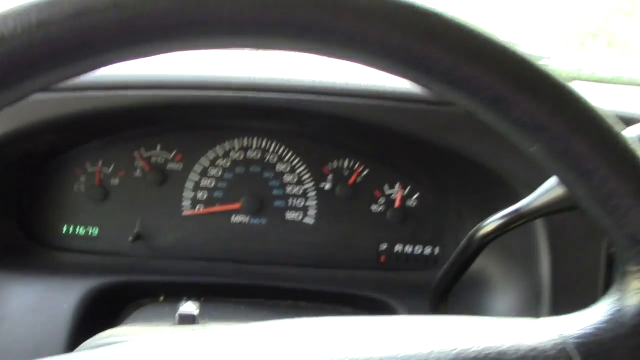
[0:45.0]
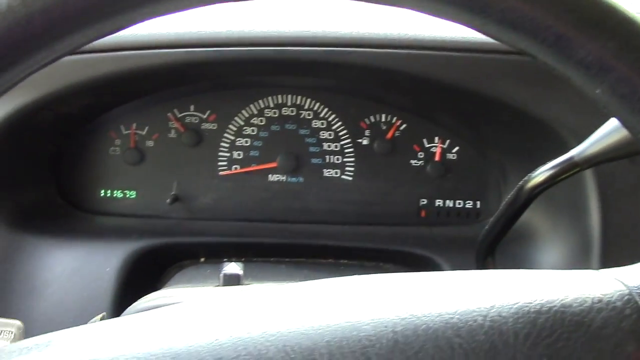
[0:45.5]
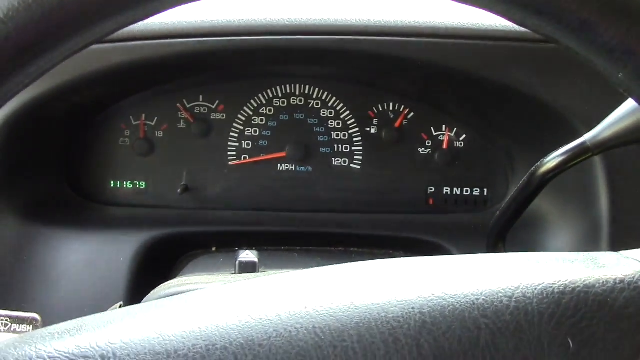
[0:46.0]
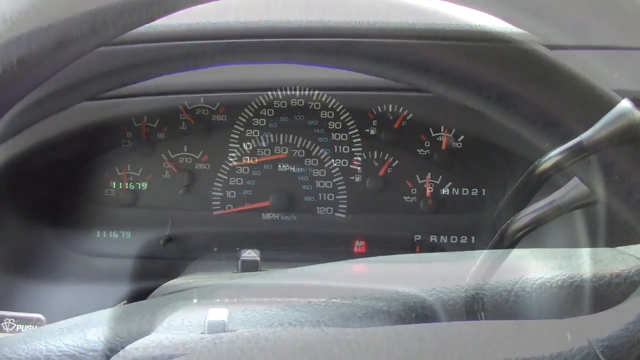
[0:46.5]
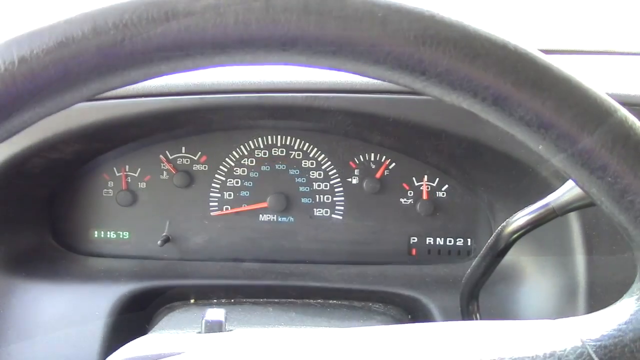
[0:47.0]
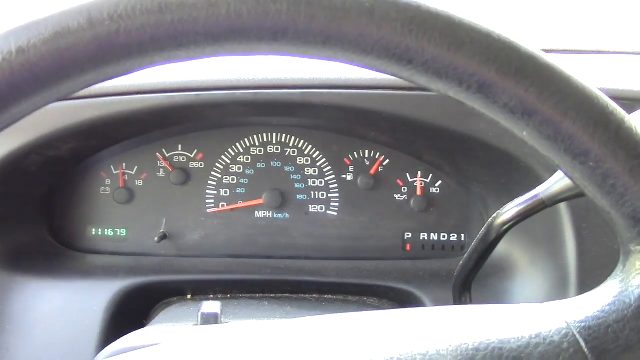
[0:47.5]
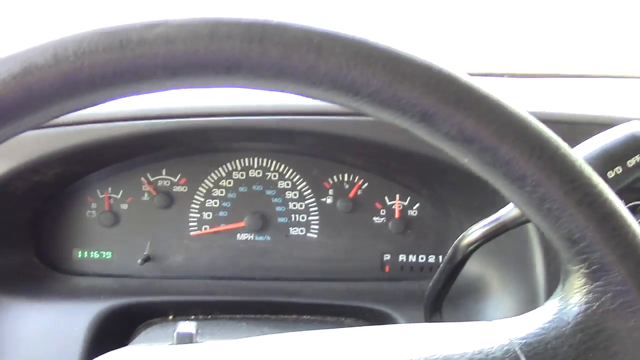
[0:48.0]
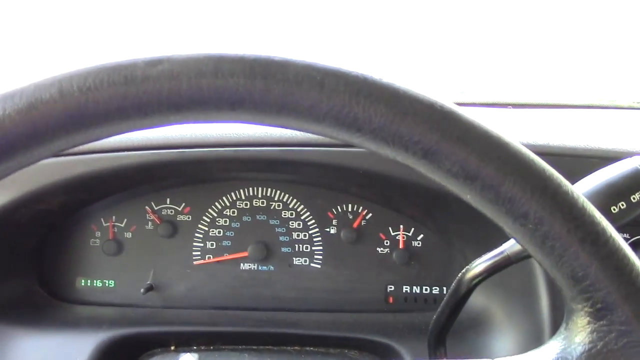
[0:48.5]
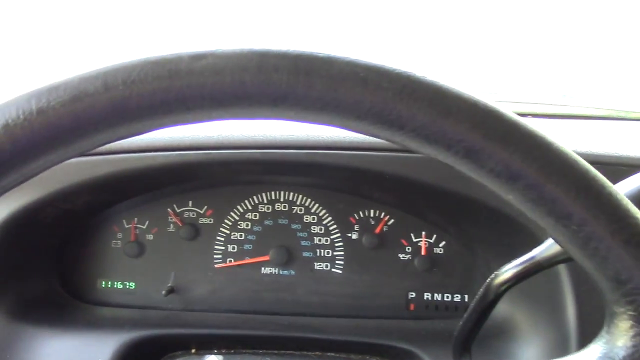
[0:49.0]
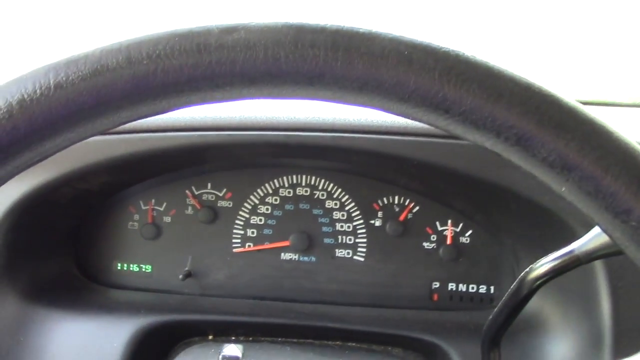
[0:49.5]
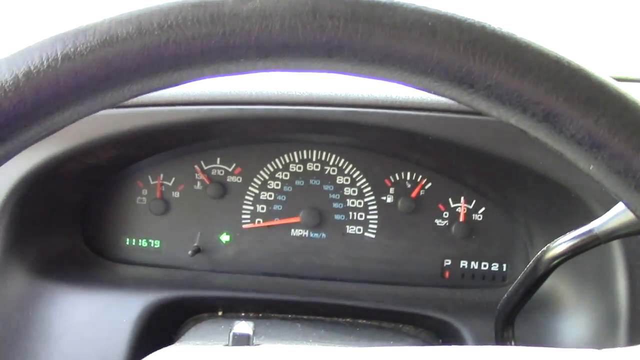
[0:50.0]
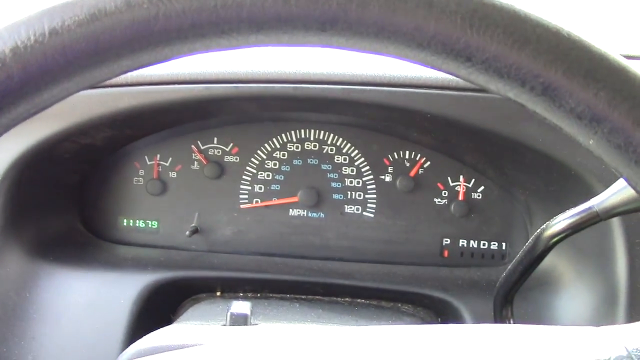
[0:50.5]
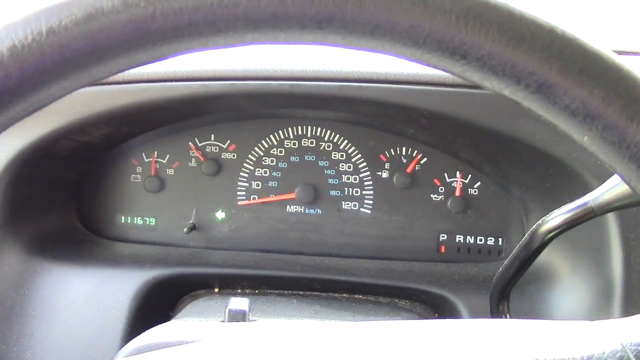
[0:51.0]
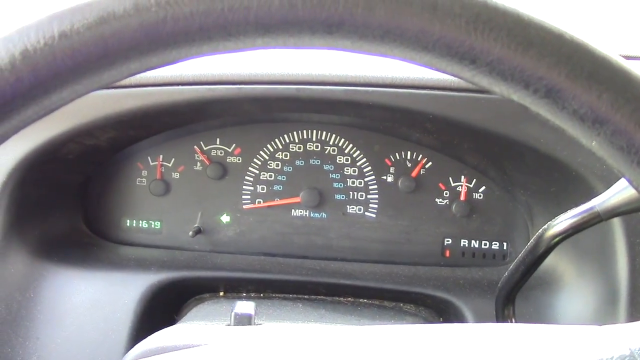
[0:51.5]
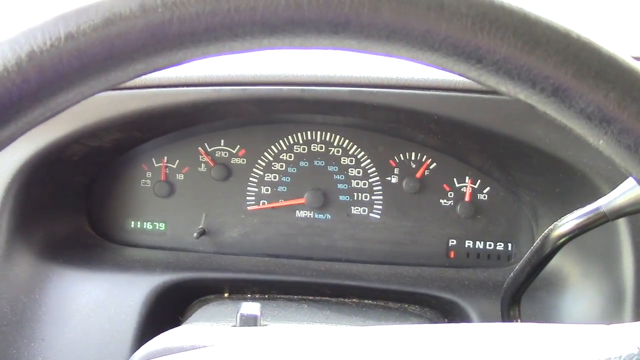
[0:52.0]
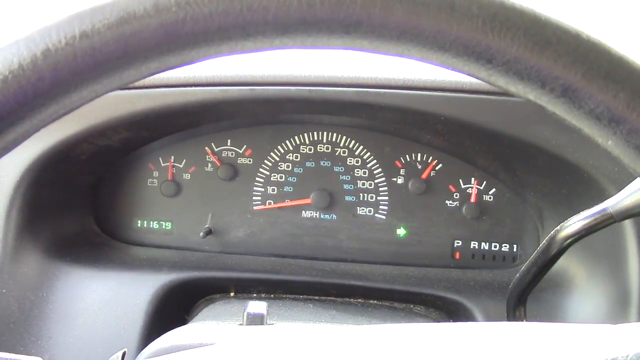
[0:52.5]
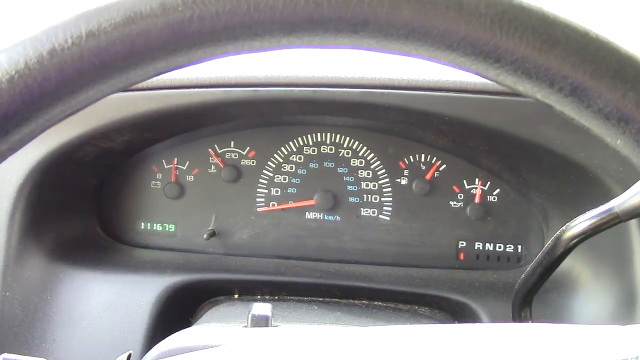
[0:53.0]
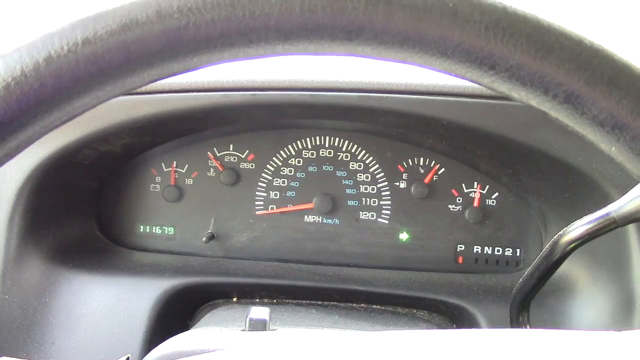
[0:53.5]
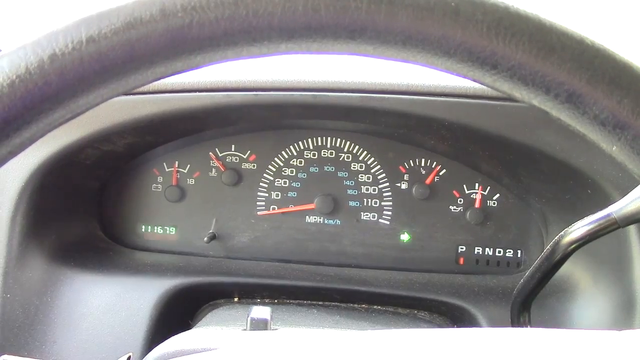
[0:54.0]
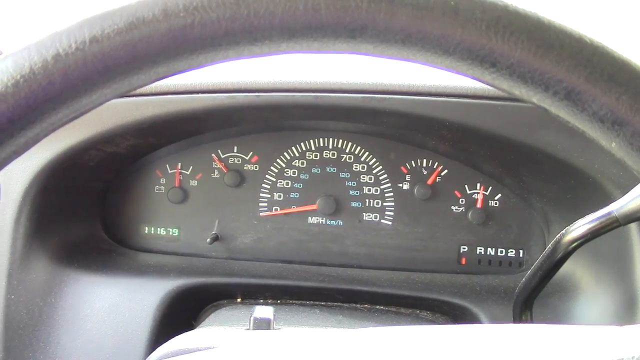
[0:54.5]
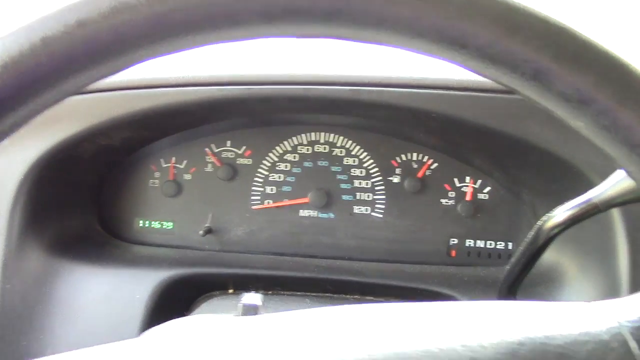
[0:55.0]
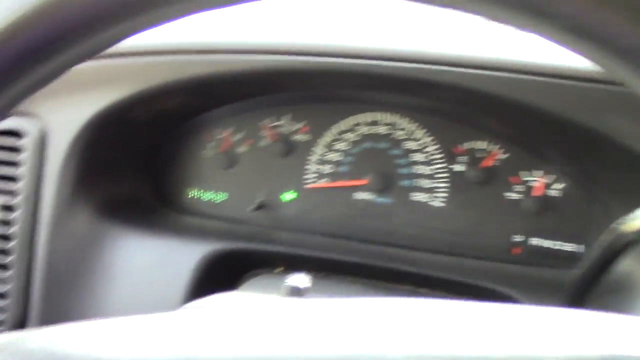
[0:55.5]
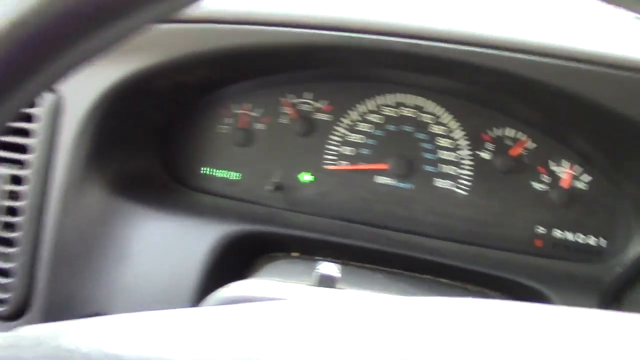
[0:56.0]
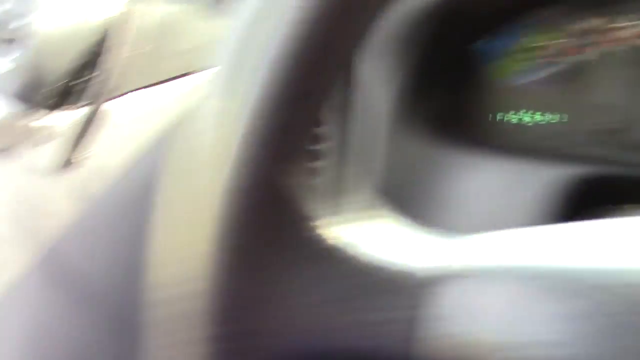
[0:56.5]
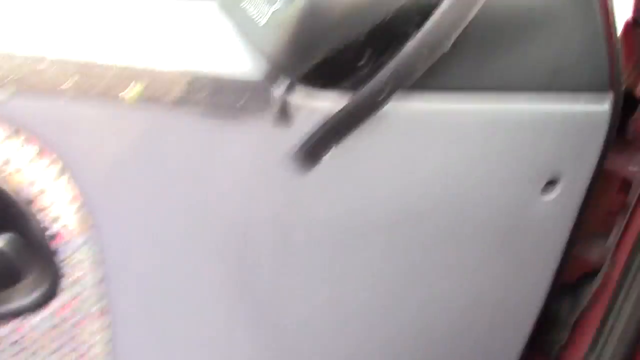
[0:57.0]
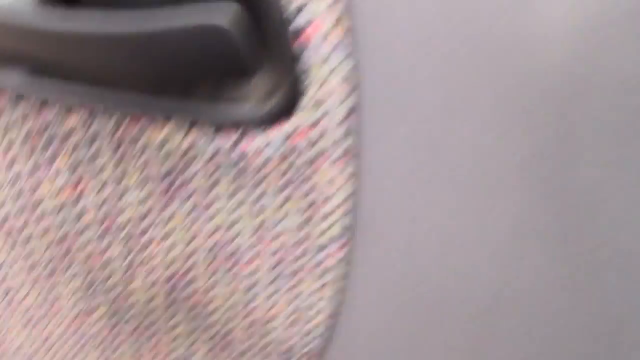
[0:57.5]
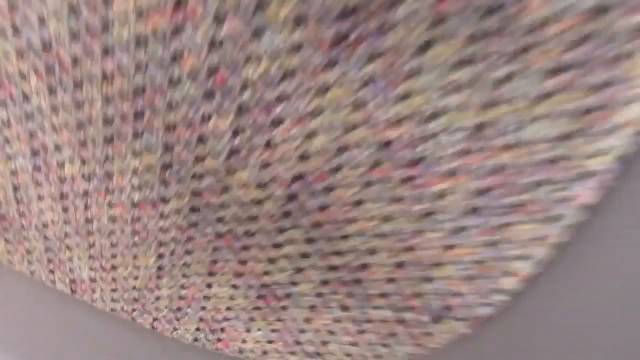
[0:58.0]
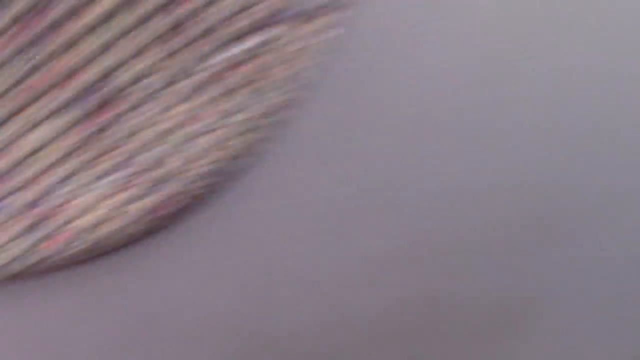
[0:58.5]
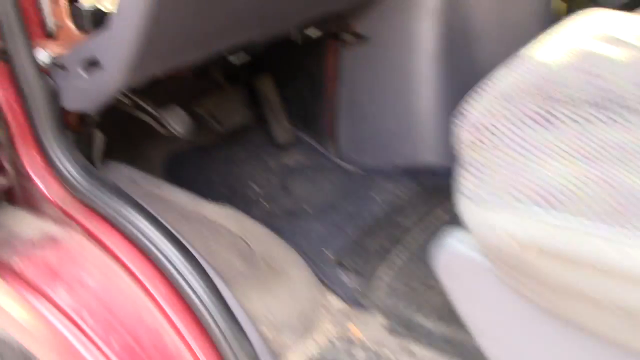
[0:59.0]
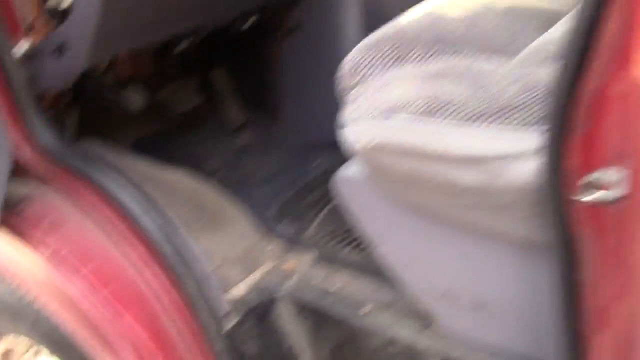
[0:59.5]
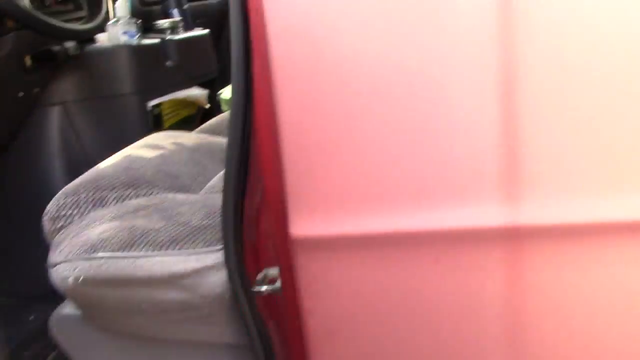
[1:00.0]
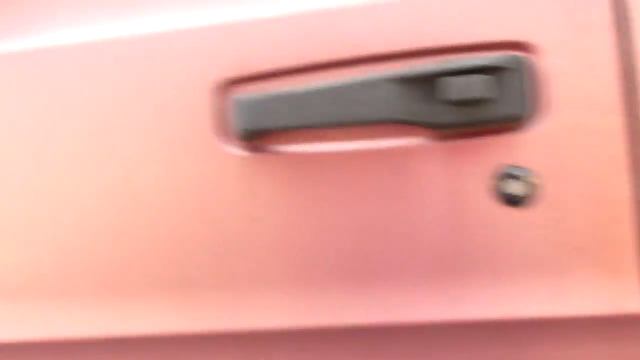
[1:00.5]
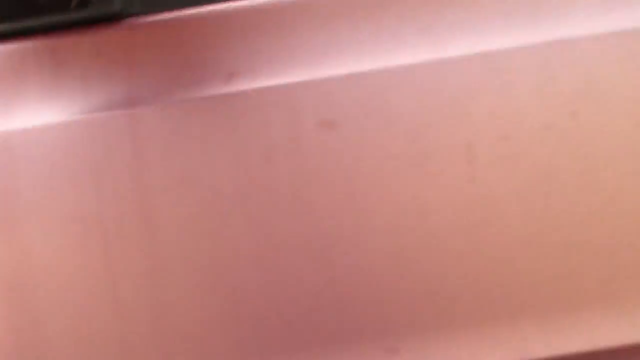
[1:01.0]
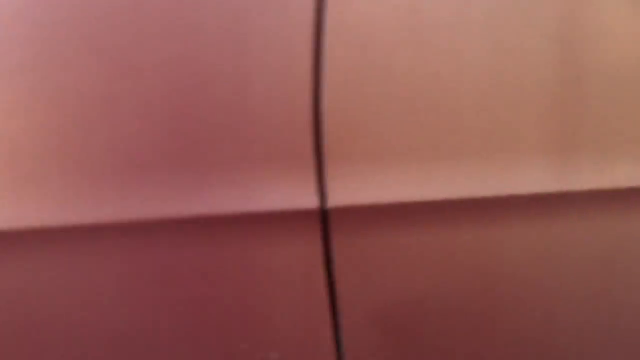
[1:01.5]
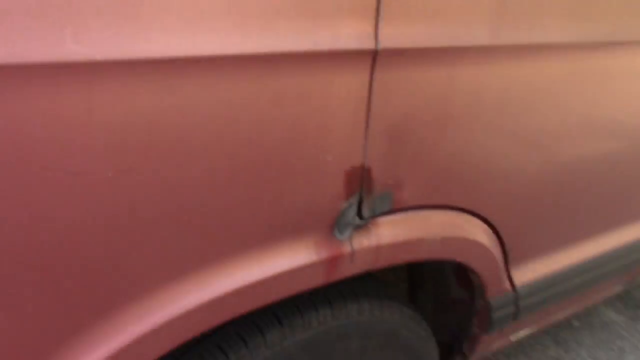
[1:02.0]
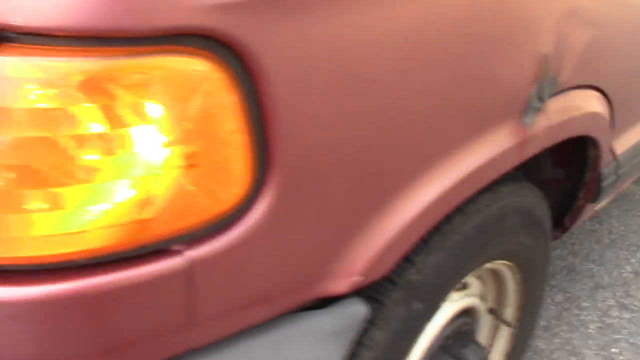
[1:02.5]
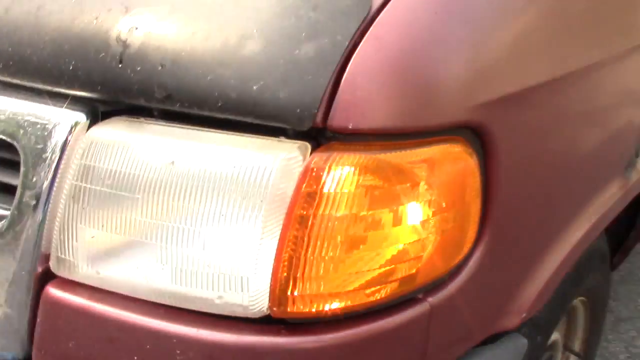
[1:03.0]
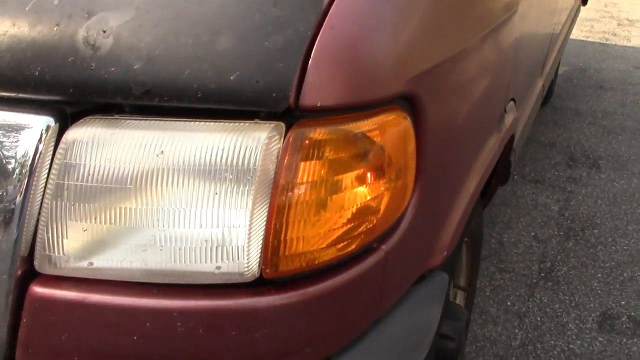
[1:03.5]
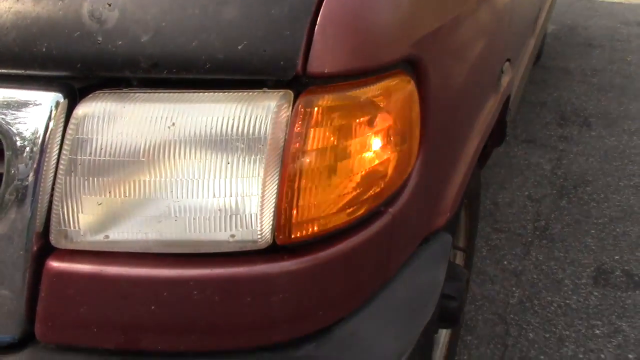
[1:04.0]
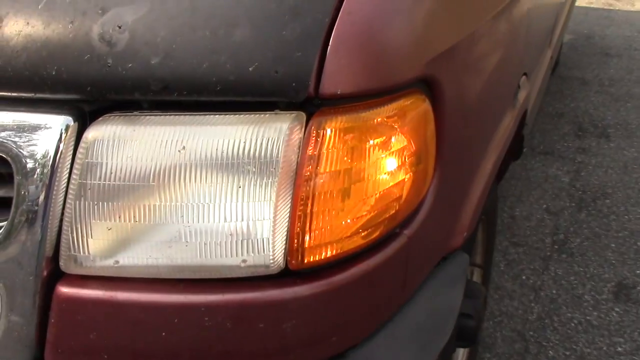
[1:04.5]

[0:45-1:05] The camera stays on the dashboard, where the left turn signal light comes on and flashes. After the left signal stops, the right turn signal starts flashing. Then the left turn signal light flashes on and off again, and the camera leaves the truck: she gets out and closes the door, and the camera comes to the left side of the truck's headlights, where the left turn signal flashes on and off at the front. Only the front headlights are shown, not the back.